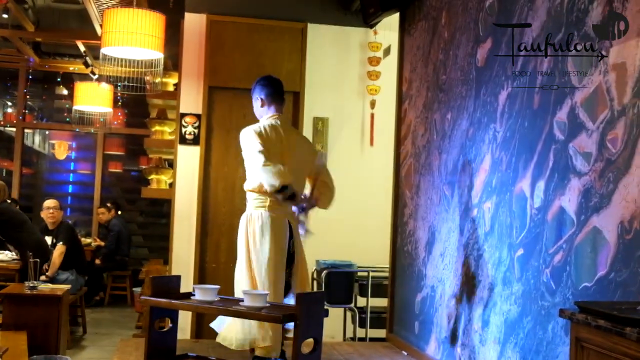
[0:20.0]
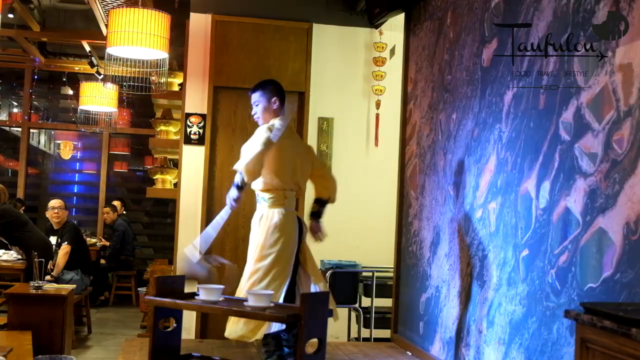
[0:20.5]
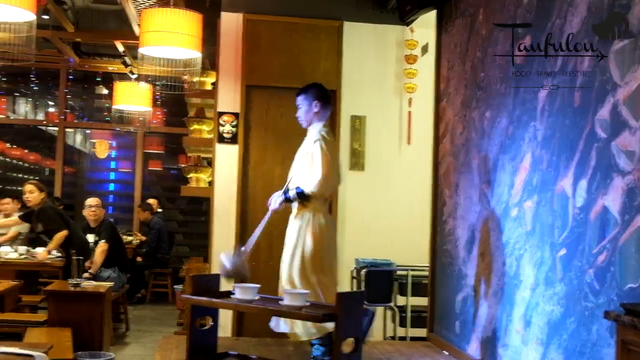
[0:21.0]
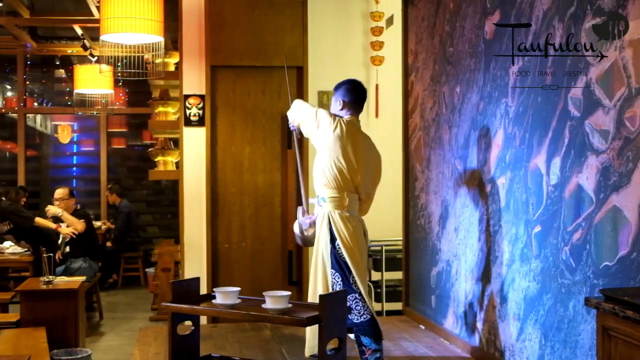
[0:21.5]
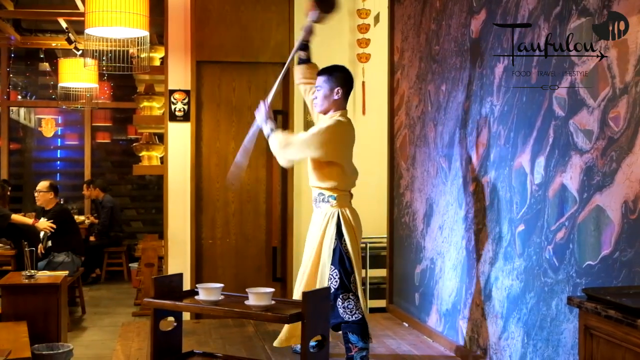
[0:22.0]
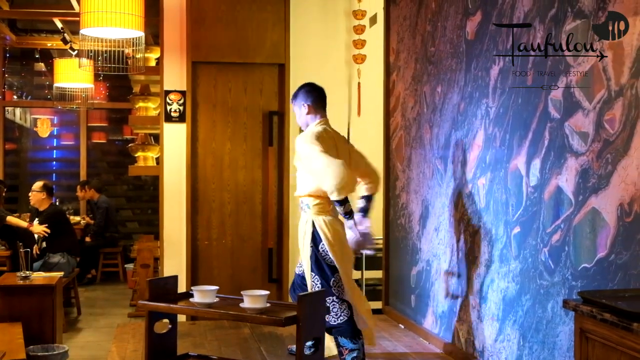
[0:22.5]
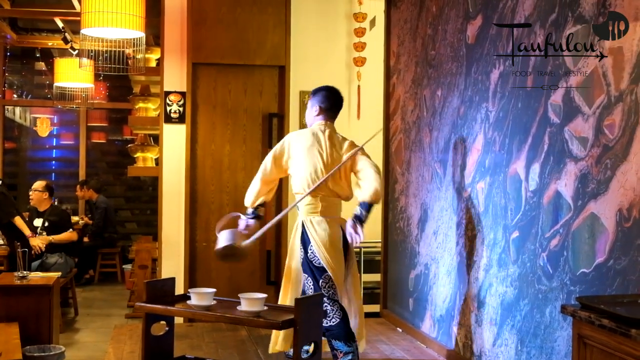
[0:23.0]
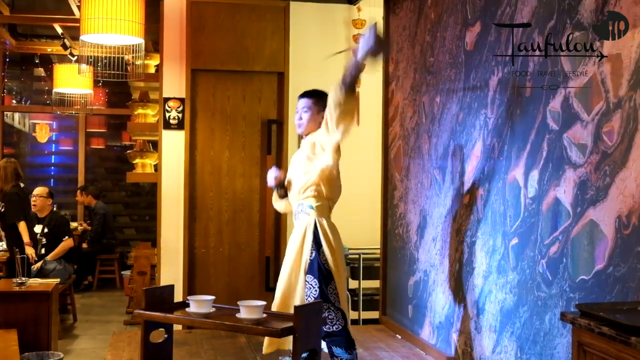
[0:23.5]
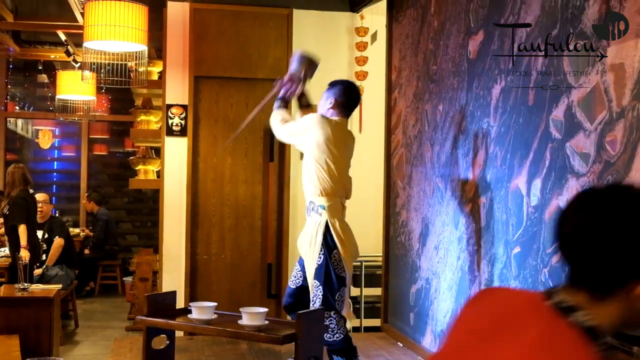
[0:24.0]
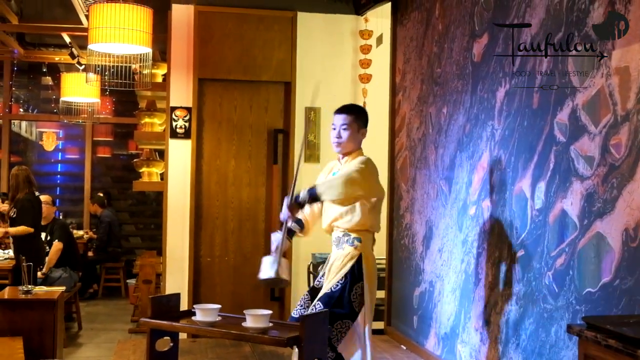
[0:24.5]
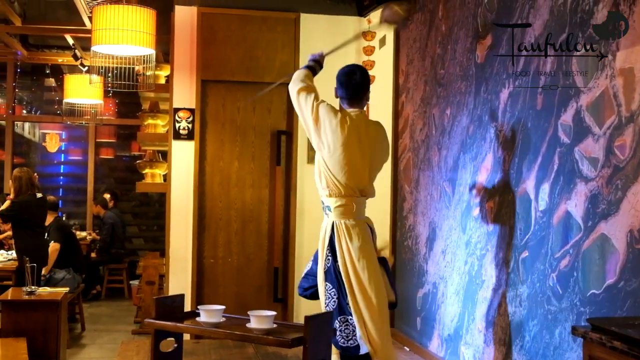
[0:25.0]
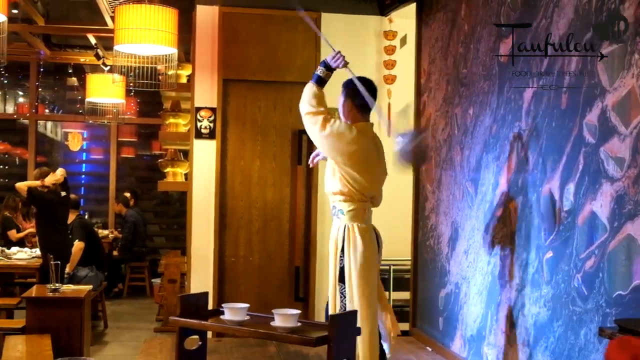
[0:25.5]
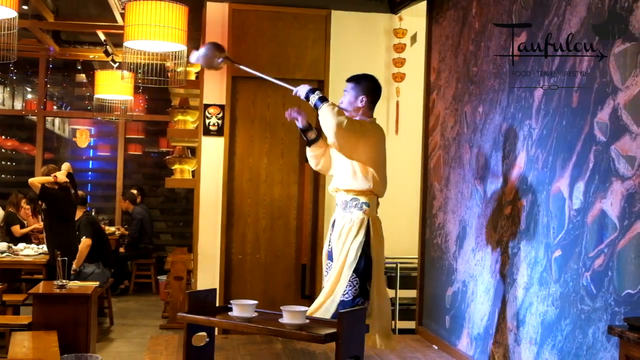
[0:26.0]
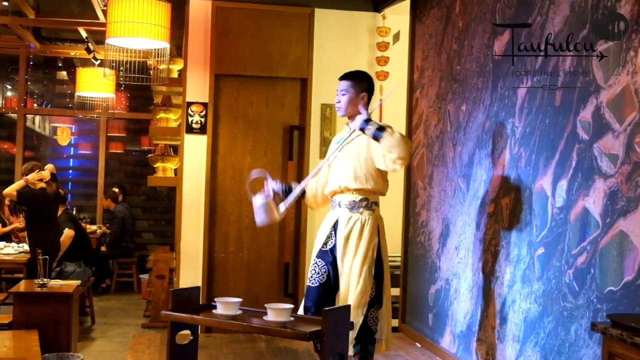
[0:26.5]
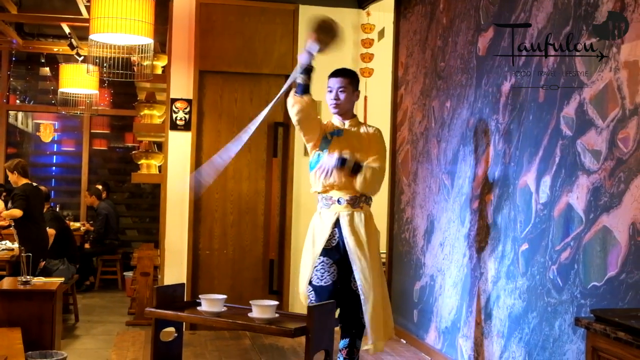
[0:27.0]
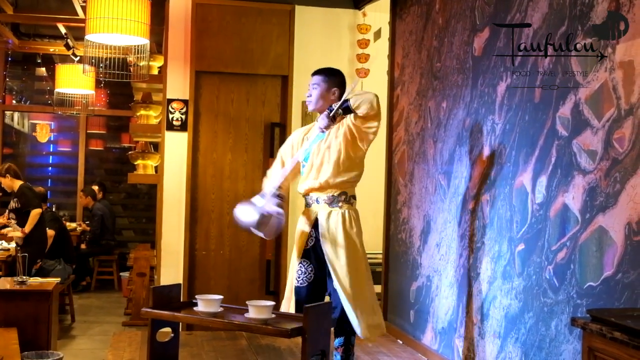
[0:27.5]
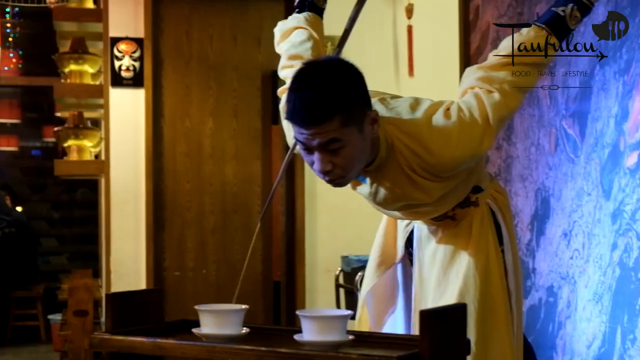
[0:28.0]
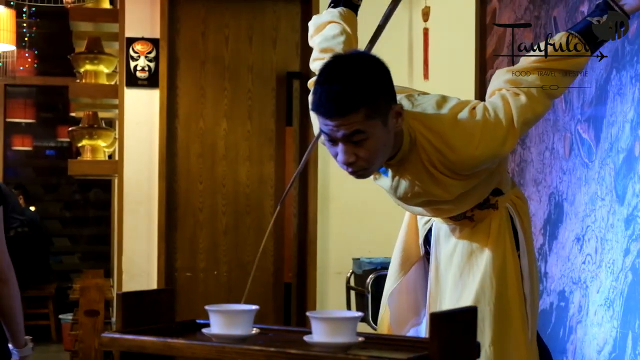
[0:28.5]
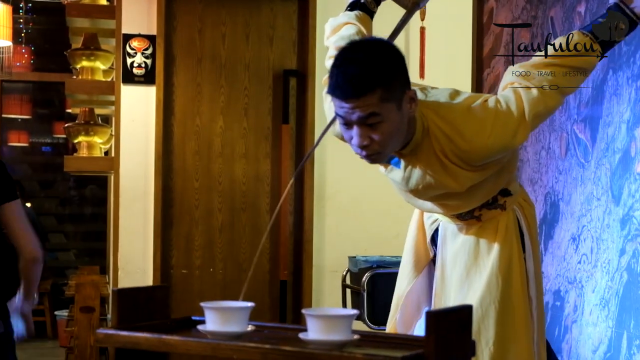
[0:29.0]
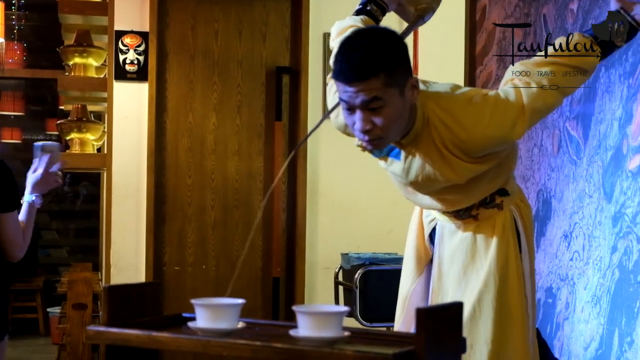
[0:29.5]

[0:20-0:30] A stage performer stands on the stage wearing something yellow that could be a coat. He holds a sword that kind of looks bronze or silver in color and twirls it around with both hands. He then seems to put his hands back and holds the sword with his right hand, aiming it at a white cup sitting on a tray. He seems to be trying to get something out of the cup with the pointed edge of the sword, and he bends over to make his aim more accurate.